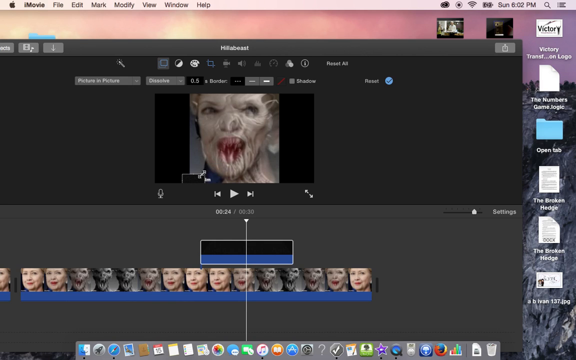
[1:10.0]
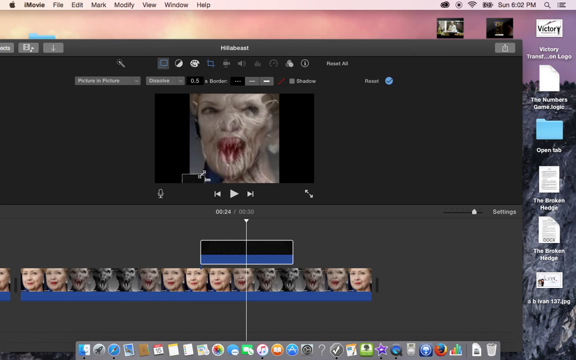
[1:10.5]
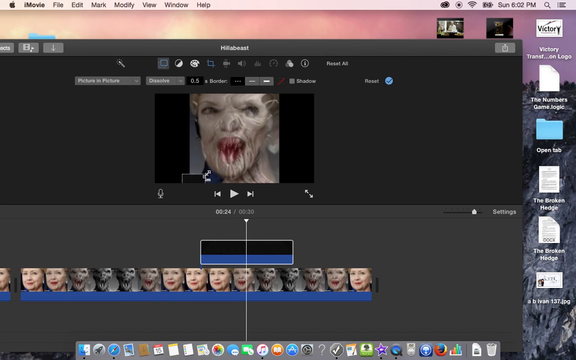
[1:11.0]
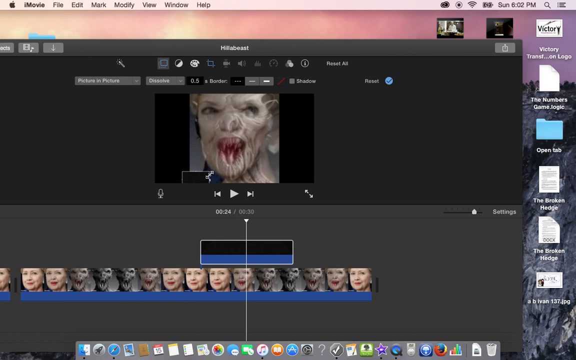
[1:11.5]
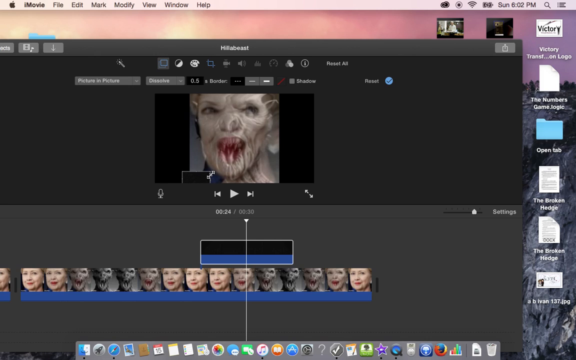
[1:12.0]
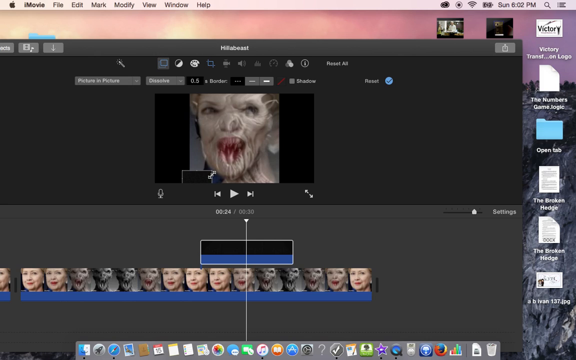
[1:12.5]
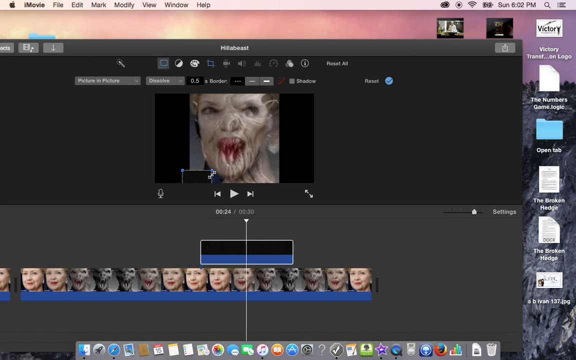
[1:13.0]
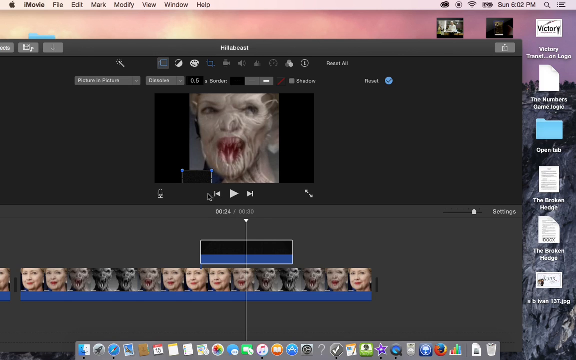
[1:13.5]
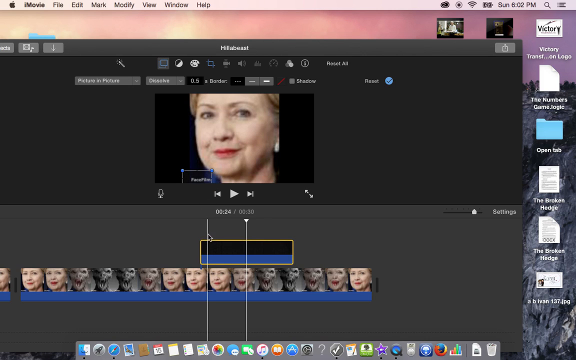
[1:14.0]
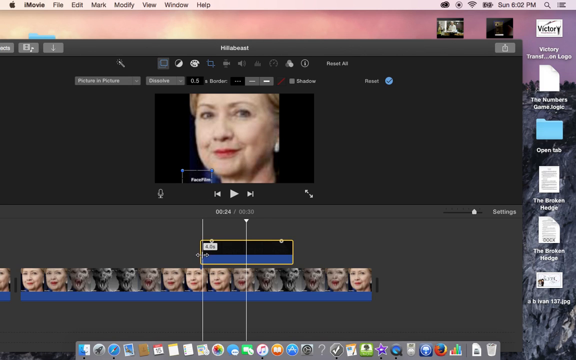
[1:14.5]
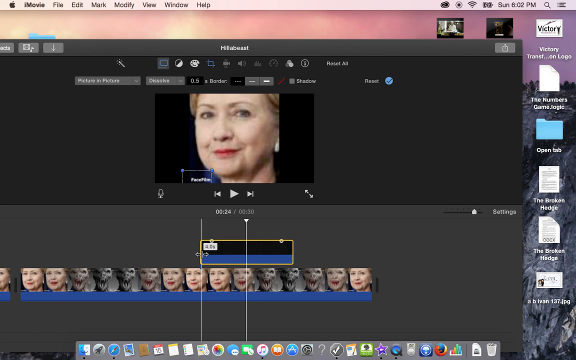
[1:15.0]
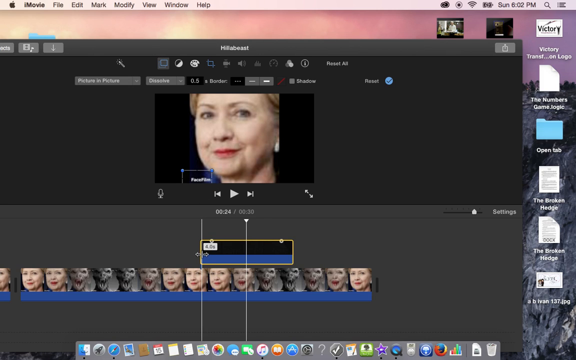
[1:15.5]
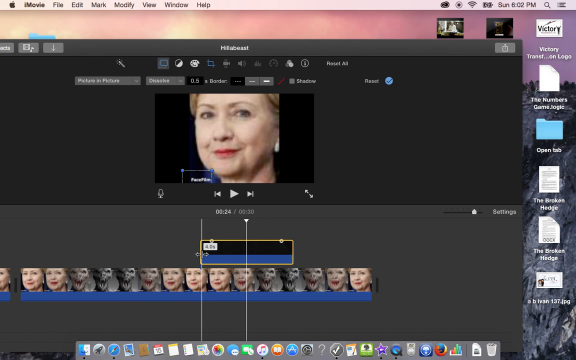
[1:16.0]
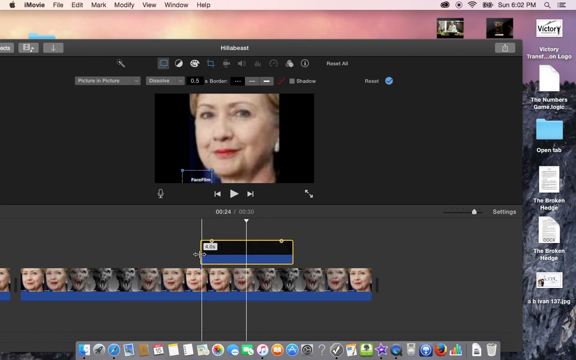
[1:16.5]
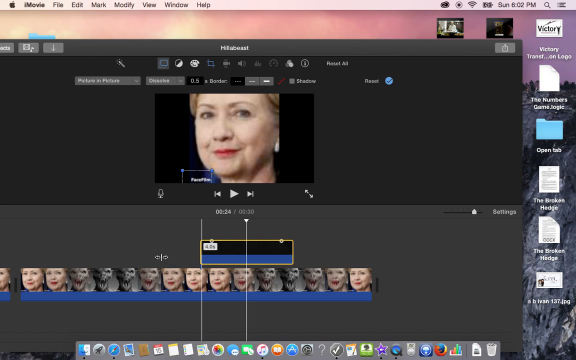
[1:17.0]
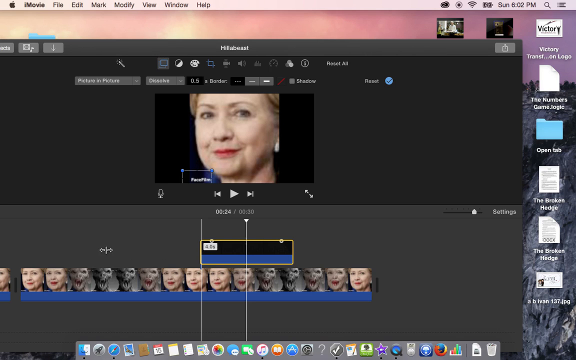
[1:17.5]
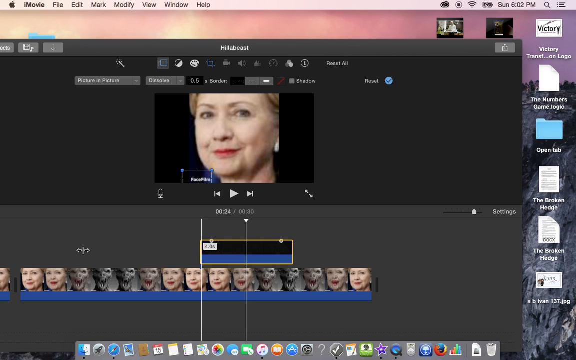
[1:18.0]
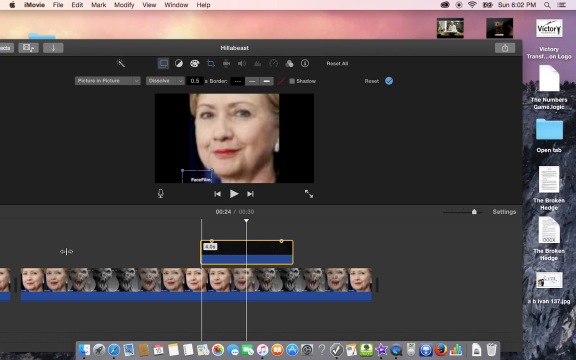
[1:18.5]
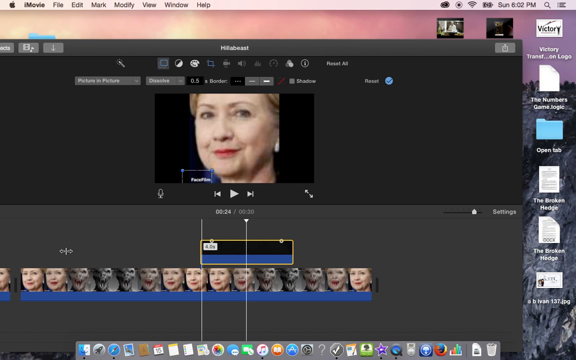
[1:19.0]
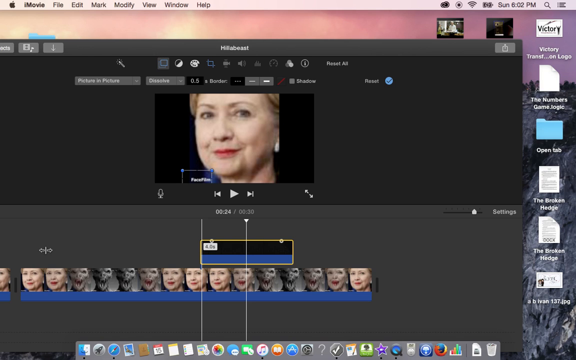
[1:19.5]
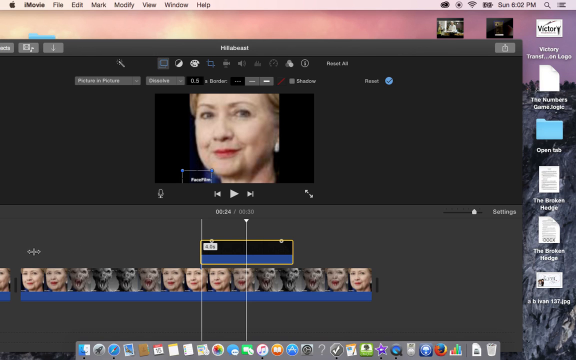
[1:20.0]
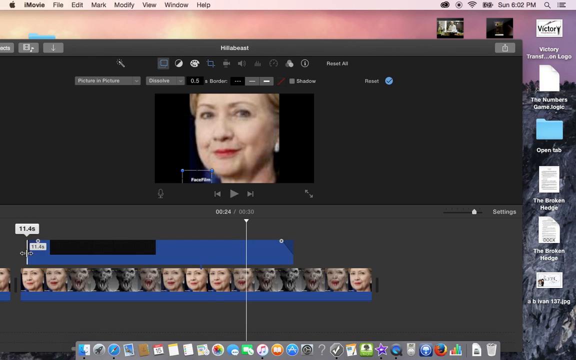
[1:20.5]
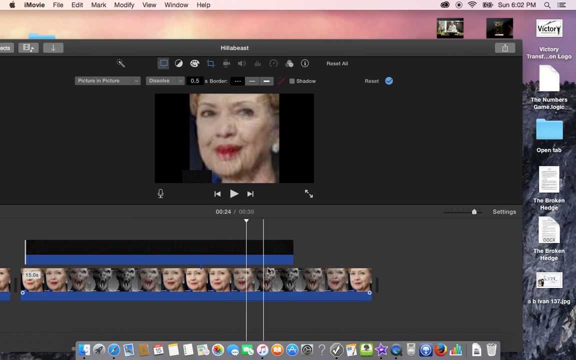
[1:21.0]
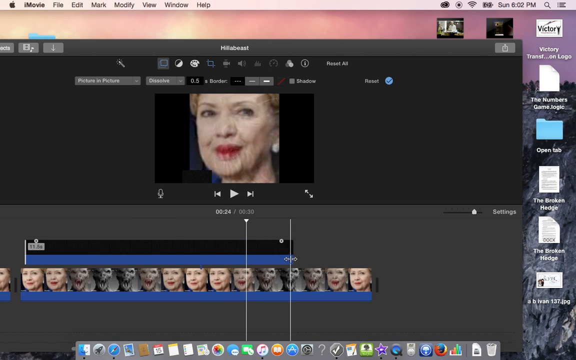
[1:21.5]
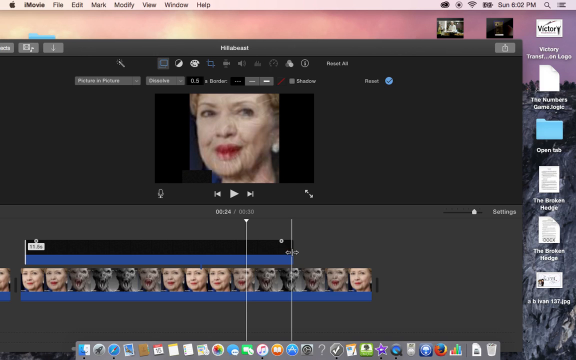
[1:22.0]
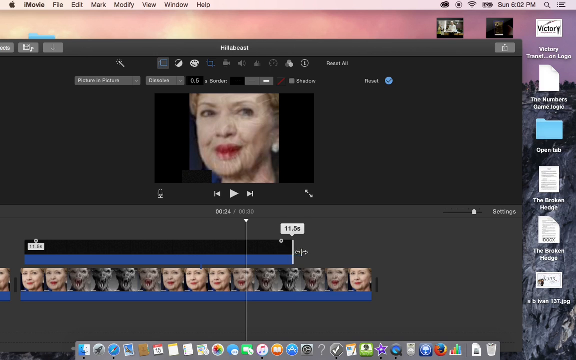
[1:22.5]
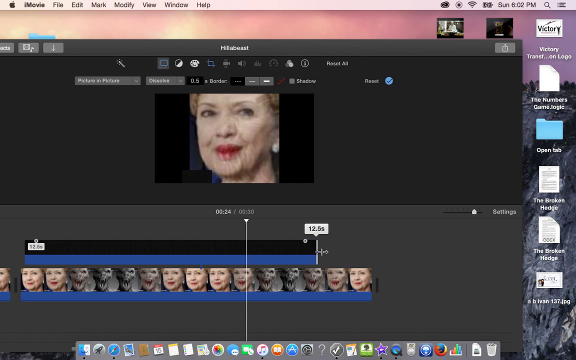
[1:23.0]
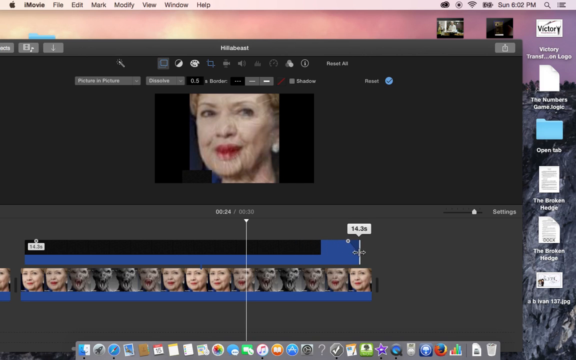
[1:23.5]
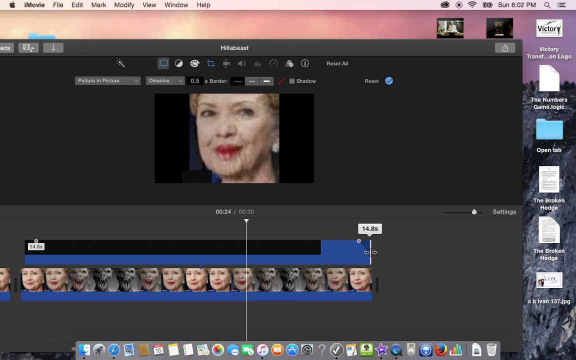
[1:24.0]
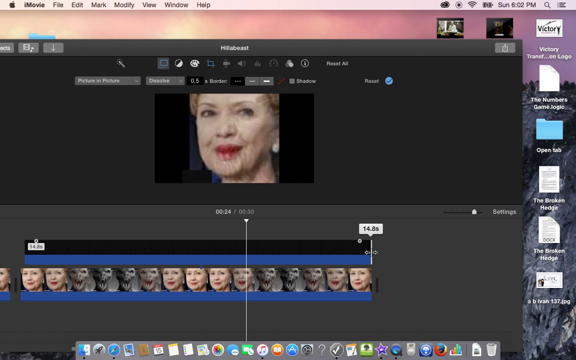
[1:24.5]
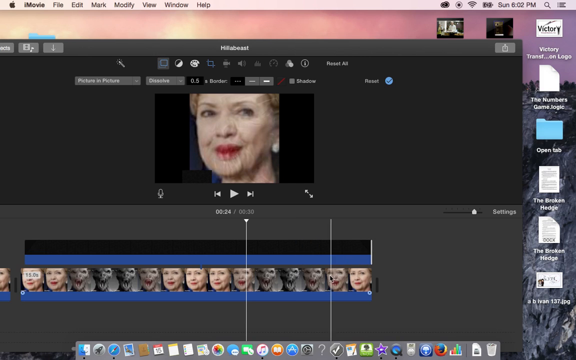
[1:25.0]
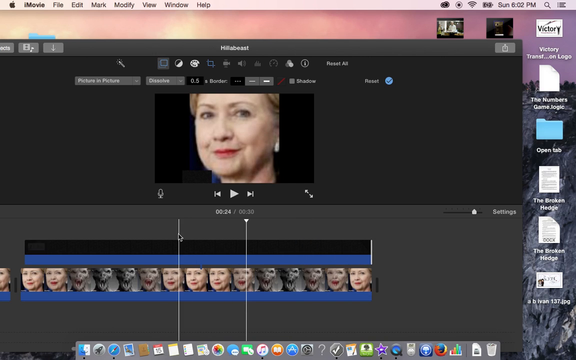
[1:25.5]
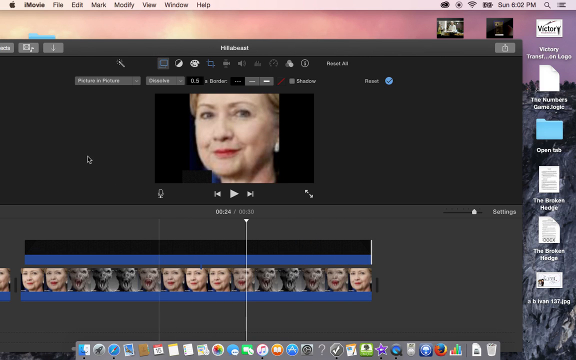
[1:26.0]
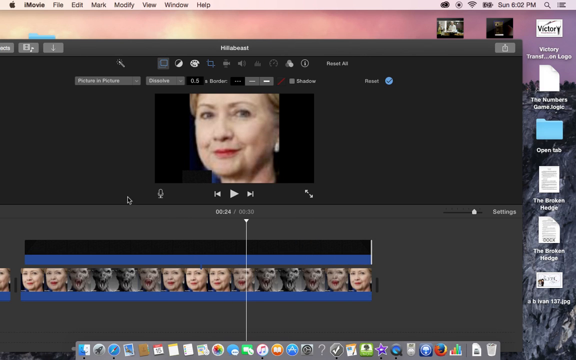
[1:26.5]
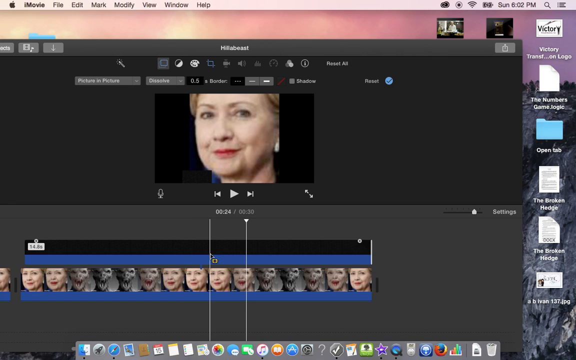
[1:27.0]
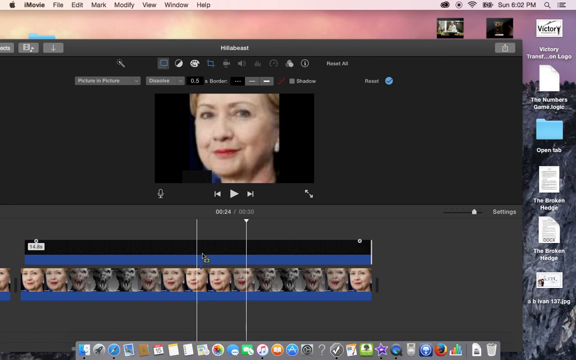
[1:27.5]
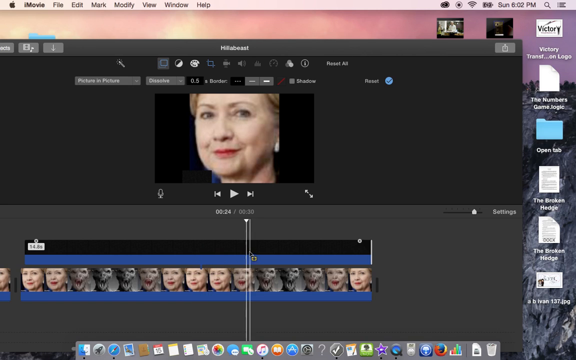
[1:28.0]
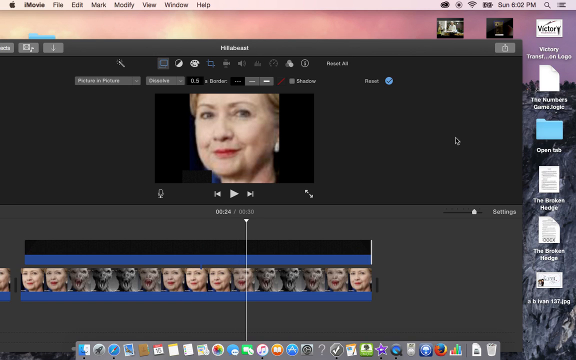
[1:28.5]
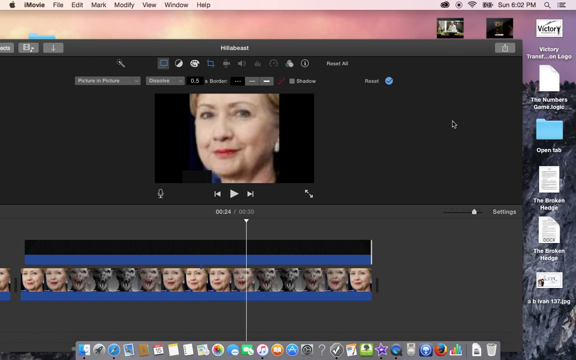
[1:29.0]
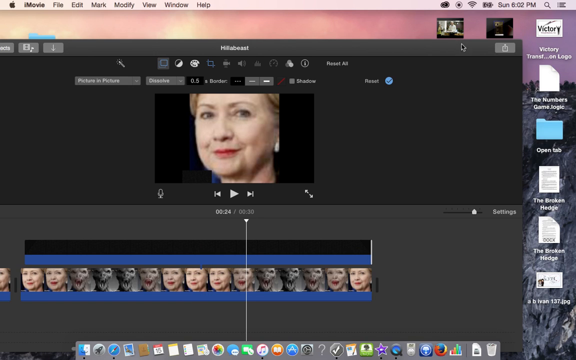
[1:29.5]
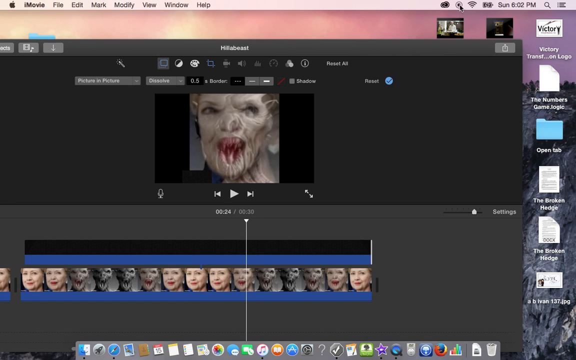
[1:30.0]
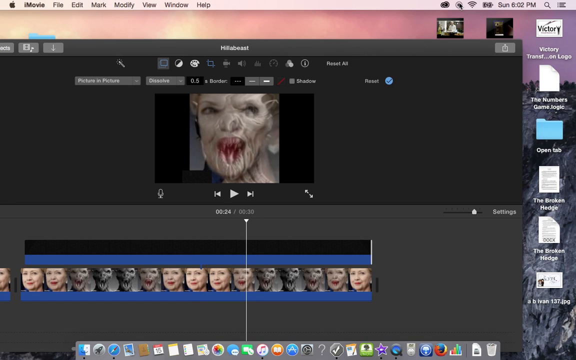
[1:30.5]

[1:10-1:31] The pictures of Hillary Clinton and the monster were together, but the person removes the monster, leaving only the picture of Hillary Clinton. He looks through the options for one that suits his needs. The desktop has the "victory transfer" item, a picture of Hillary Clinton and an open template. "QuickTime Player" is at the top left, with File, Edit, New, Windows and Help options, on an Apple device. He moves the picture within the window and then chooses the picture-in-picture option.